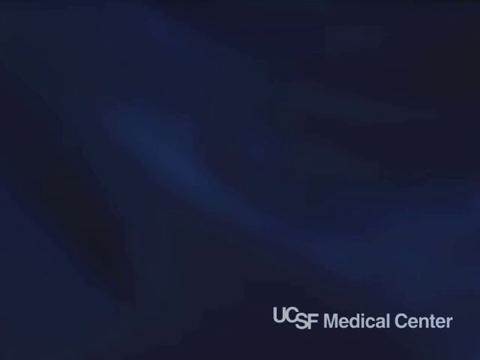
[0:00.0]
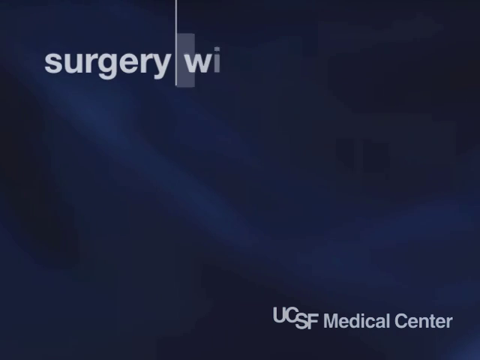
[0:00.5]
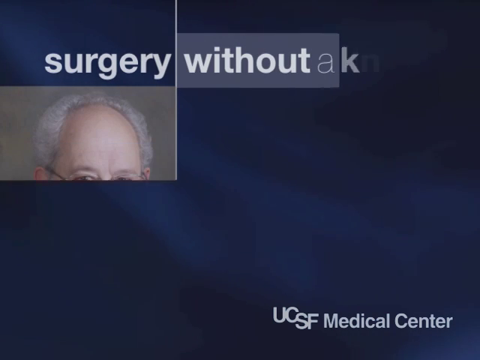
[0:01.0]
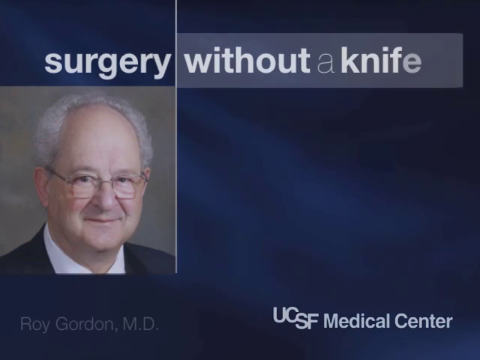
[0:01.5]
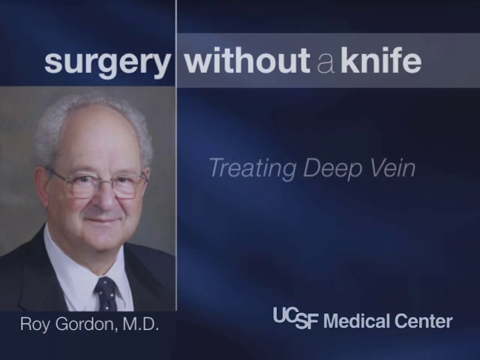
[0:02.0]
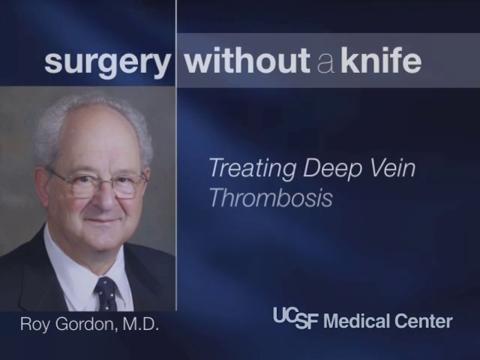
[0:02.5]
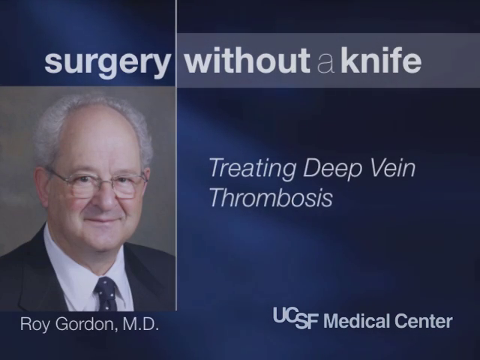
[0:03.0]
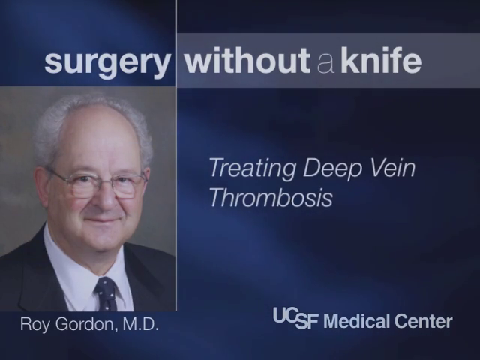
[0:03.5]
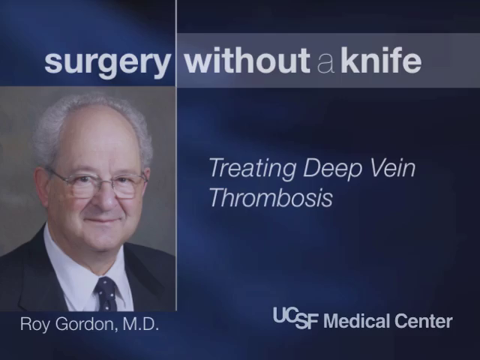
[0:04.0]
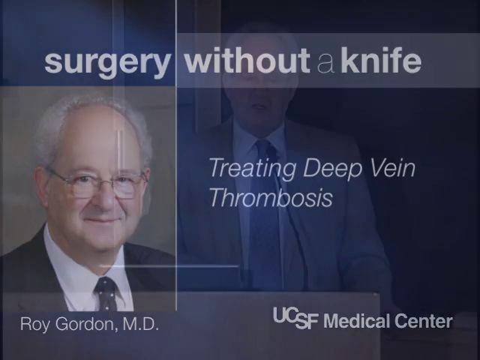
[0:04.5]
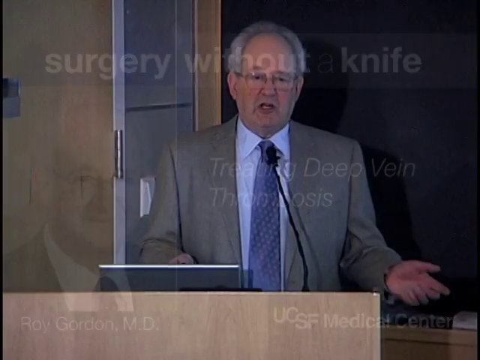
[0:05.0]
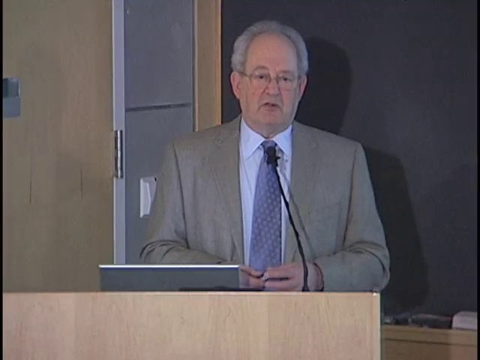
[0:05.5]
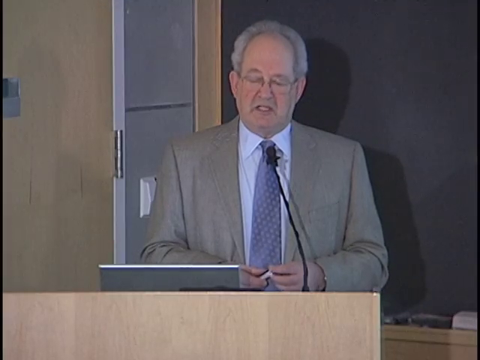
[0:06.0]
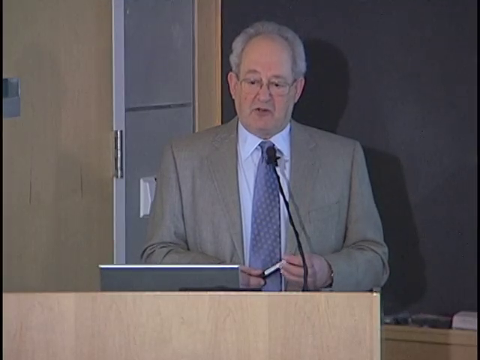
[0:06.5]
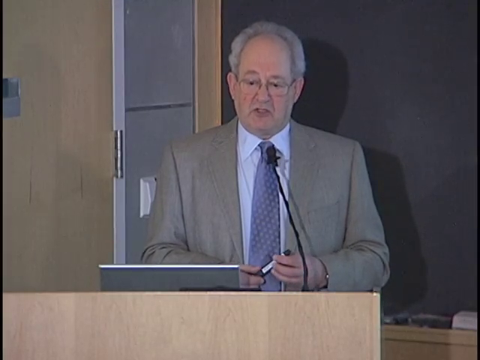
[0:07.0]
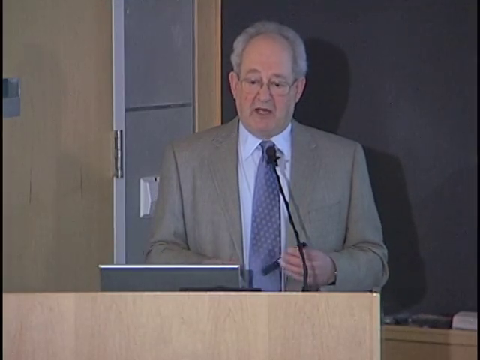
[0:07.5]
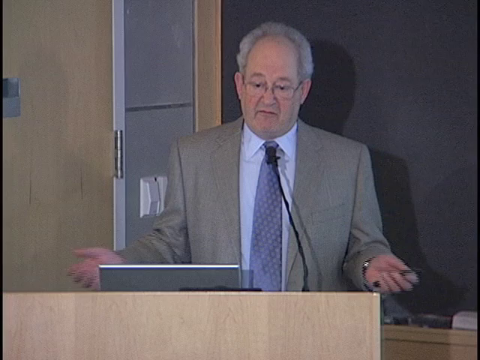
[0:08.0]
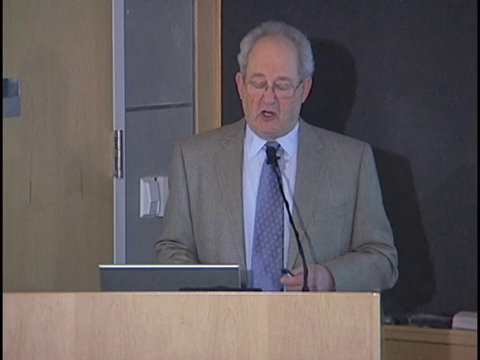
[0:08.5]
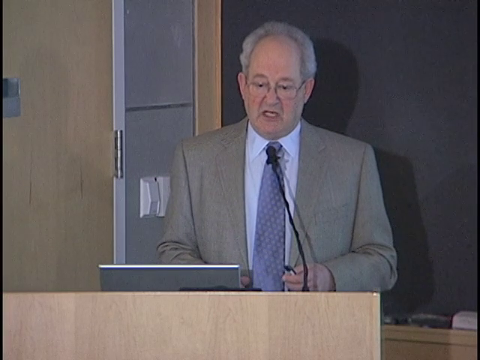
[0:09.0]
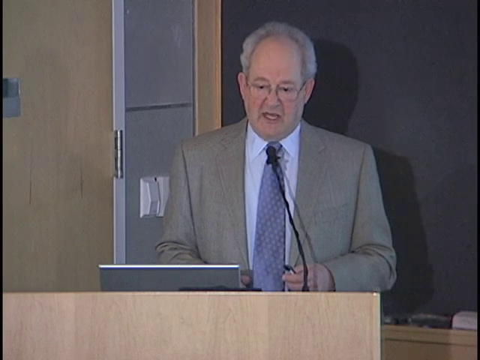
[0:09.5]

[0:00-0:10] Against a blue background, white text at the bottom reads "UCSF Medical Center." A photo of a man wearing glasses appears with text underneath that says "Roy Gordon MD," and on-screen text reads "surgery without a knife treating deep vein thrombosis." The video then cuts to footage of this man talking into a microphone at a podium. He has what looks to be a computer in front of him that he looks at while talking, and he holds a pen or a marker in his hand.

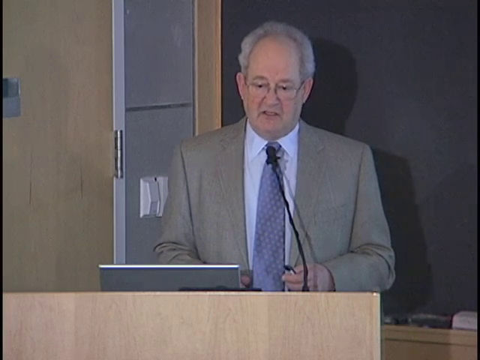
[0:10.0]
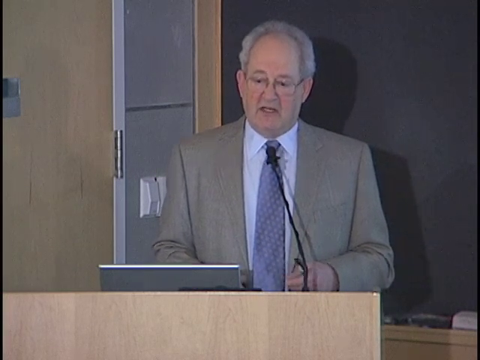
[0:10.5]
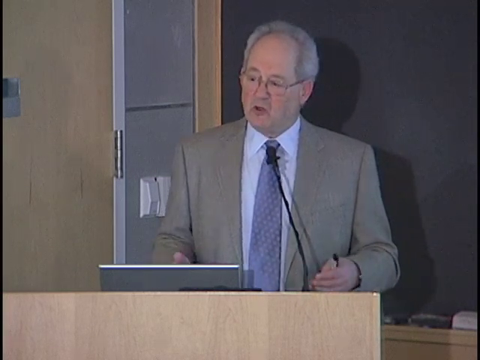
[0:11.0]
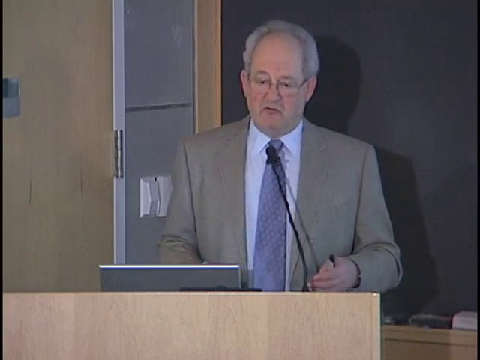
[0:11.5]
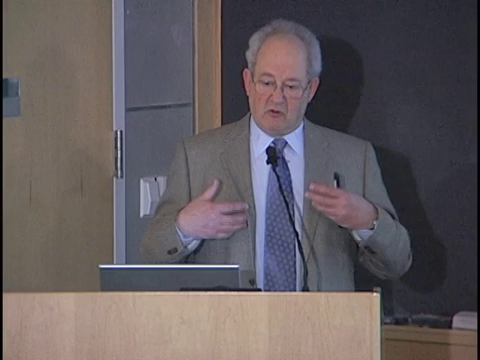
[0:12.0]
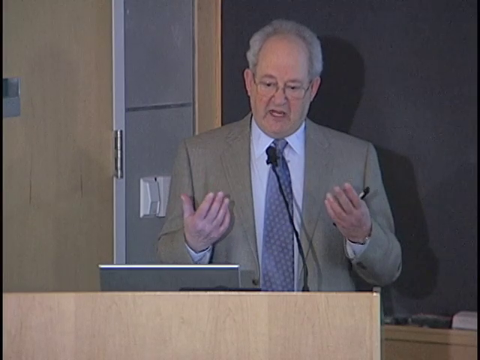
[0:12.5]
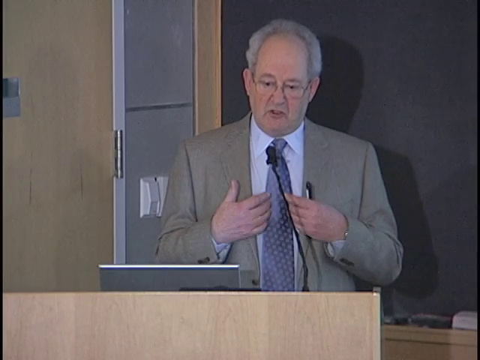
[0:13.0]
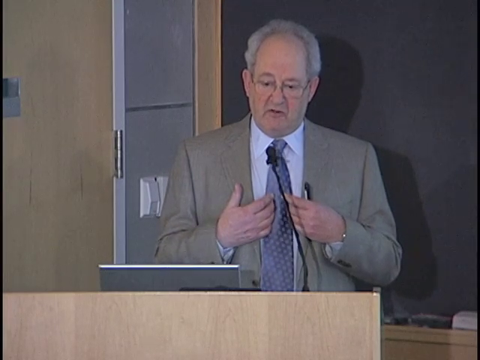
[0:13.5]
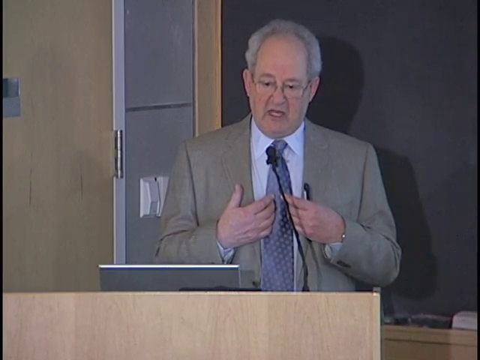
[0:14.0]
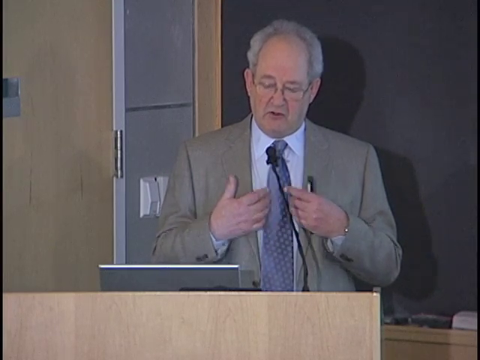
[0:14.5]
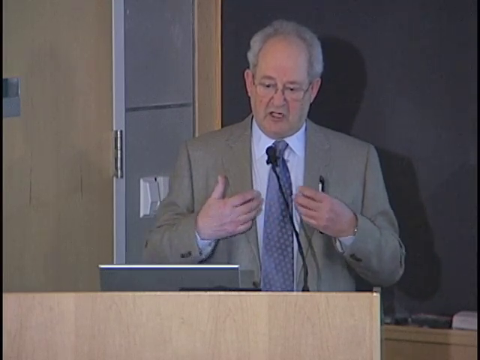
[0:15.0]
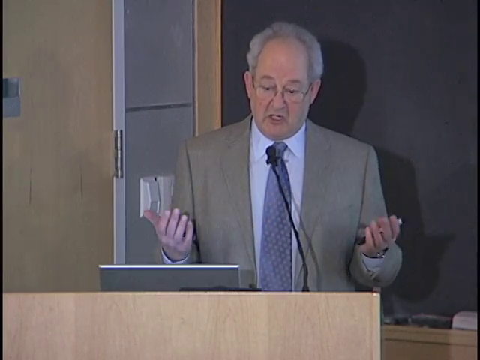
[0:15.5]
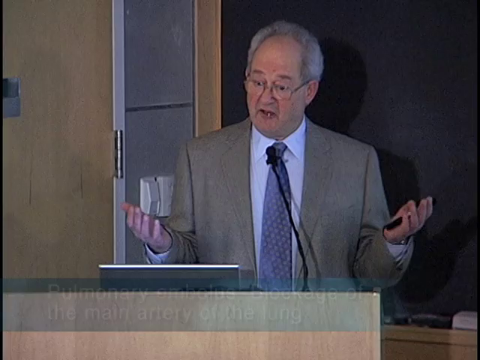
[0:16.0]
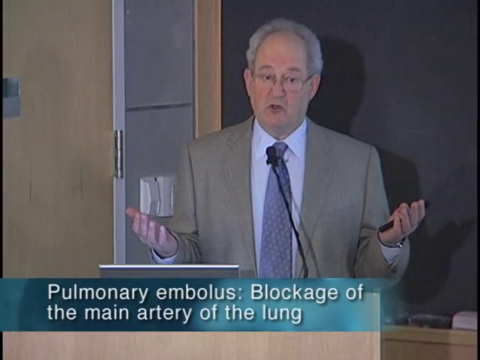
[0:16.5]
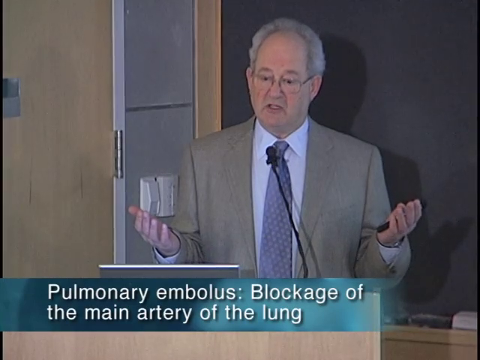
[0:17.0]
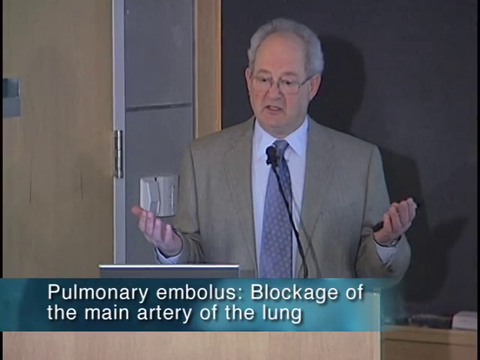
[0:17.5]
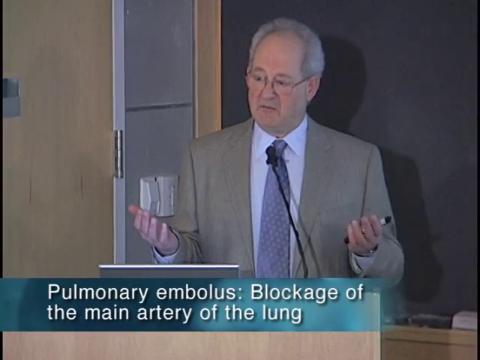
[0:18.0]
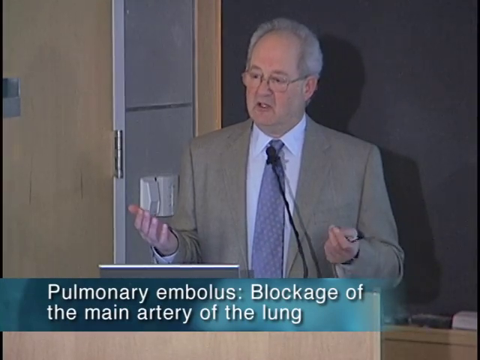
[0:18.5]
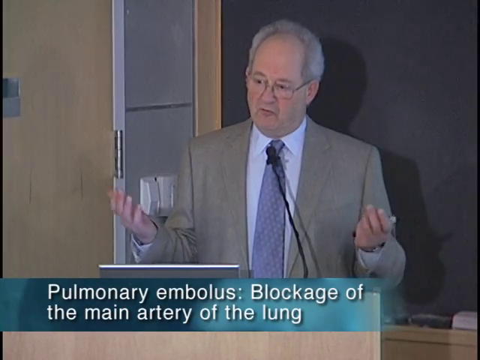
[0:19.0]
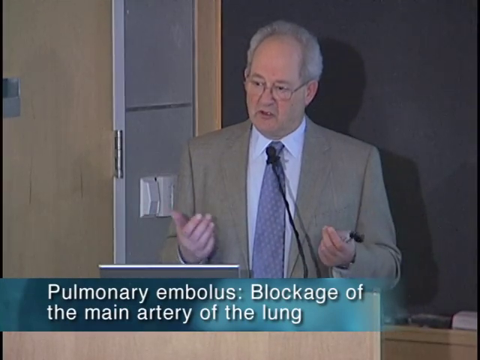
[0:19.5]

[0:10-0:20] A man with a very large forehead and some white hair on top of his head wears a pair of glasses. He is an older man, possibly in his 60s, dressed in a gray suit with a blue tie and a blue collar. He speaks into a microphone while holding a pen, with a computer in front of him that he looks at, sitting on a podium. He looks down, talks into the microphone, and uses his hands to convey expression. A small blue box then appears at the bottom of the screen with white text that says "Pulmonary embolus blockage of the main artery of the lung."